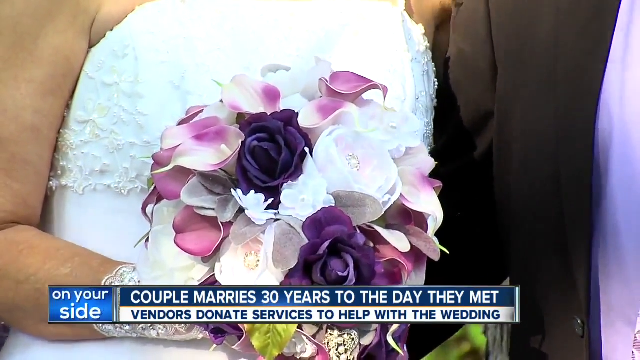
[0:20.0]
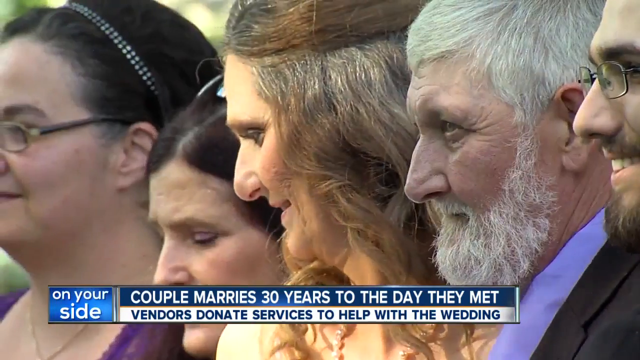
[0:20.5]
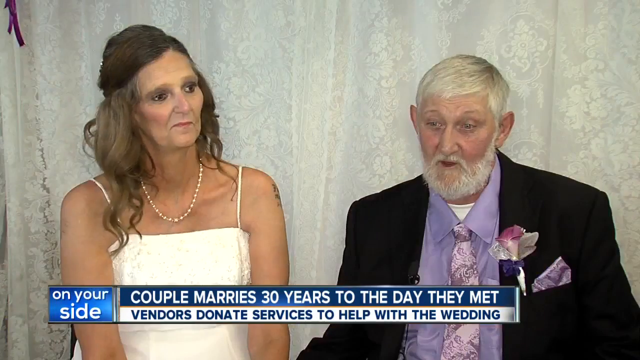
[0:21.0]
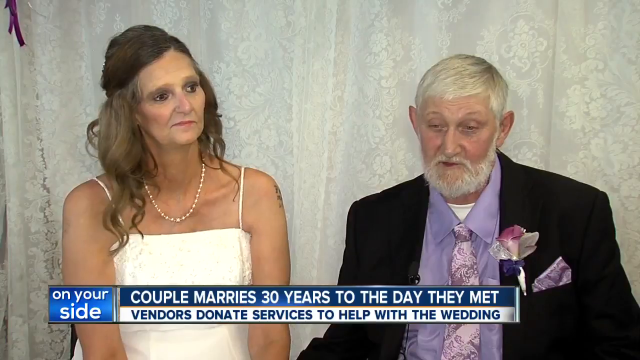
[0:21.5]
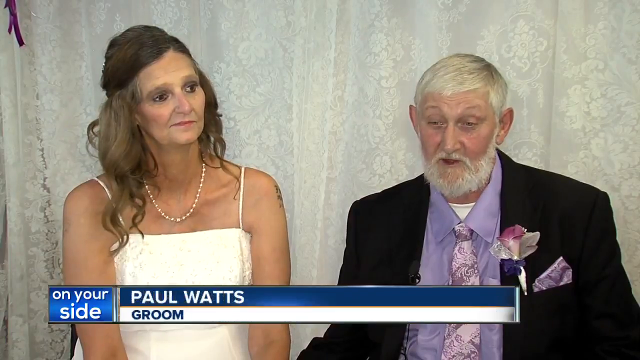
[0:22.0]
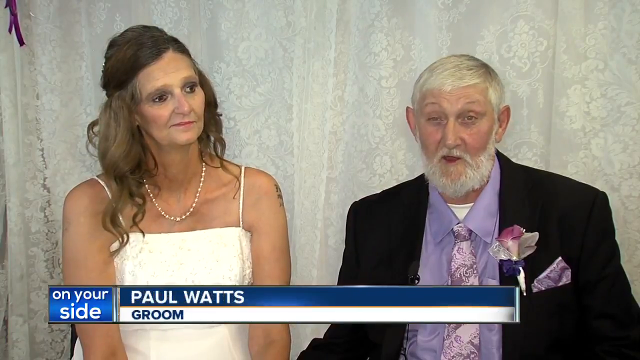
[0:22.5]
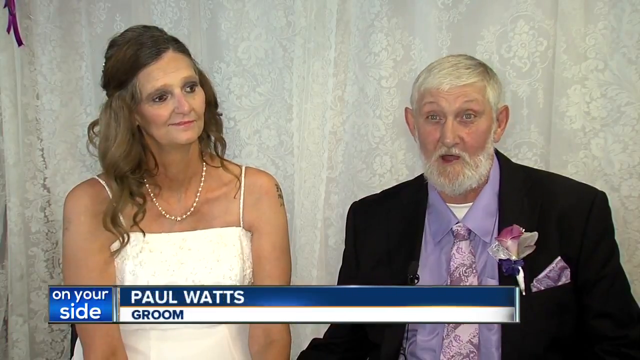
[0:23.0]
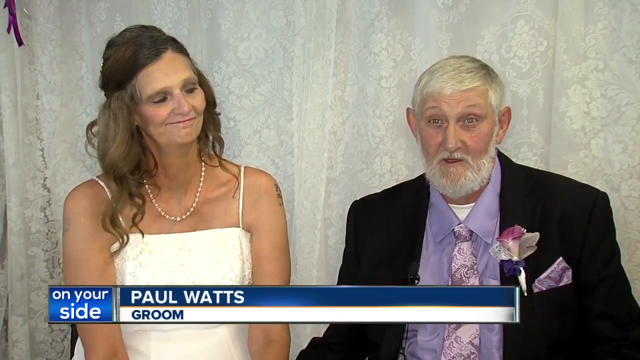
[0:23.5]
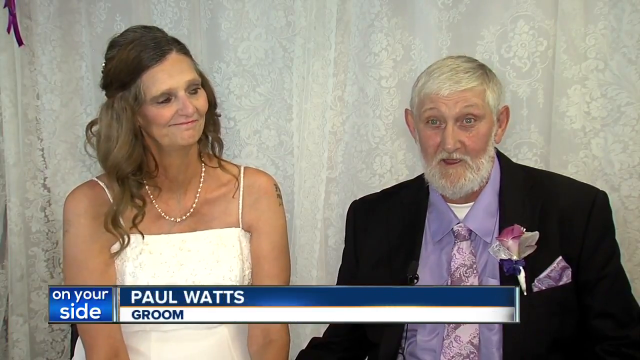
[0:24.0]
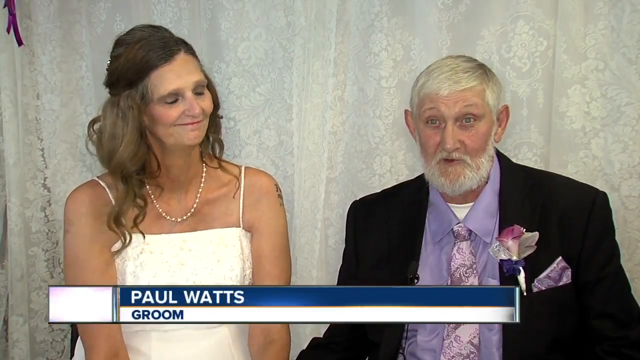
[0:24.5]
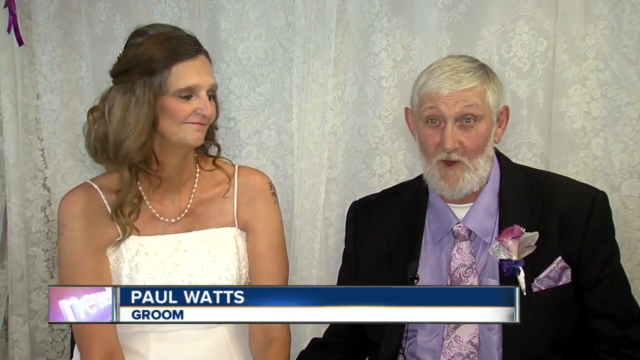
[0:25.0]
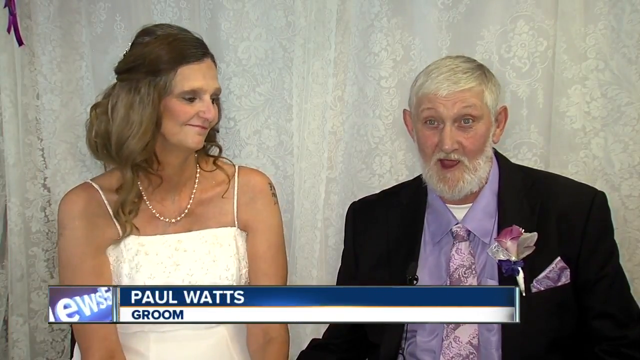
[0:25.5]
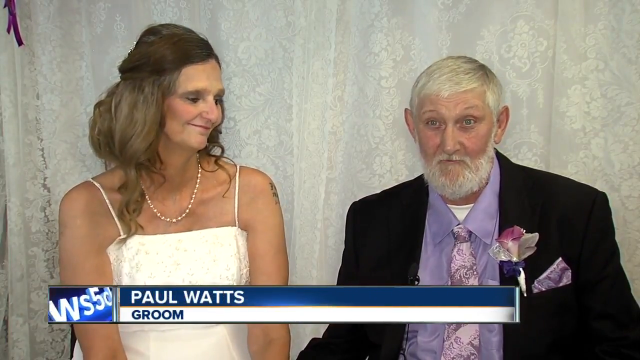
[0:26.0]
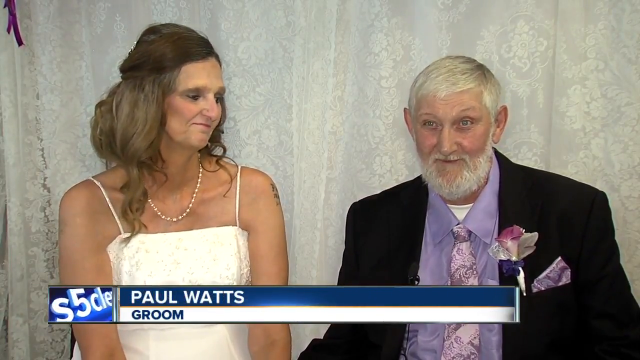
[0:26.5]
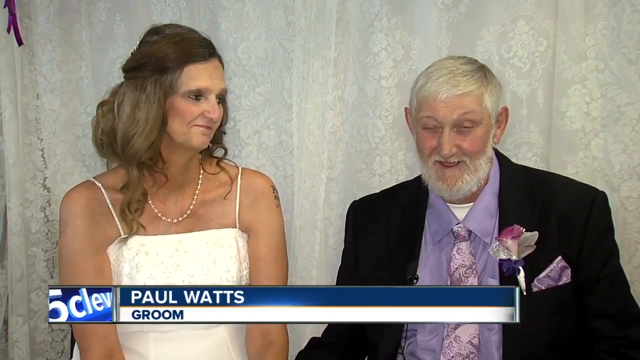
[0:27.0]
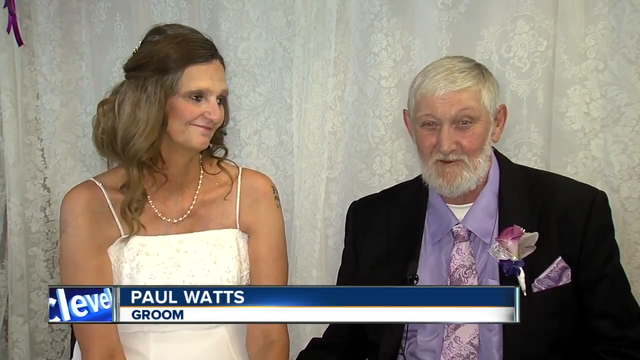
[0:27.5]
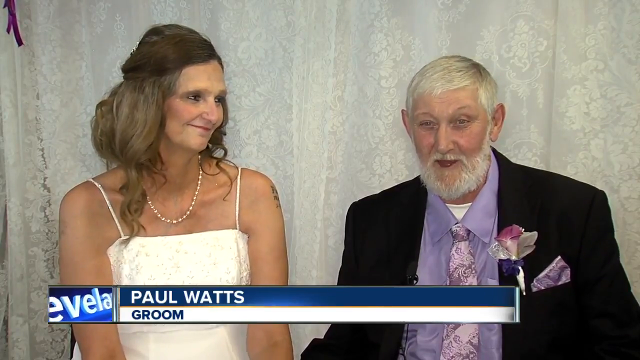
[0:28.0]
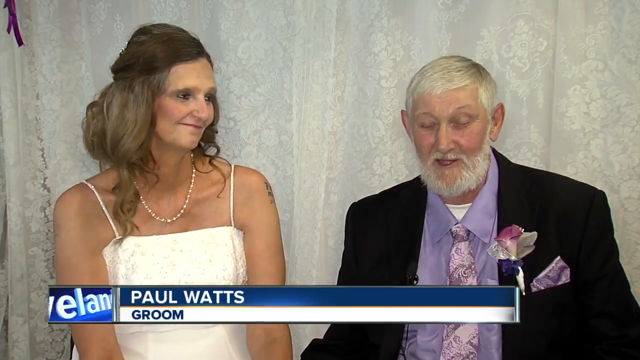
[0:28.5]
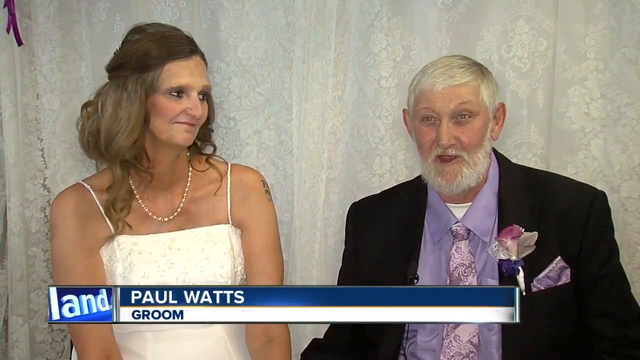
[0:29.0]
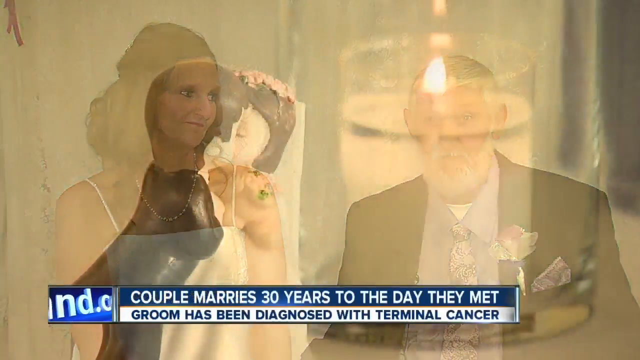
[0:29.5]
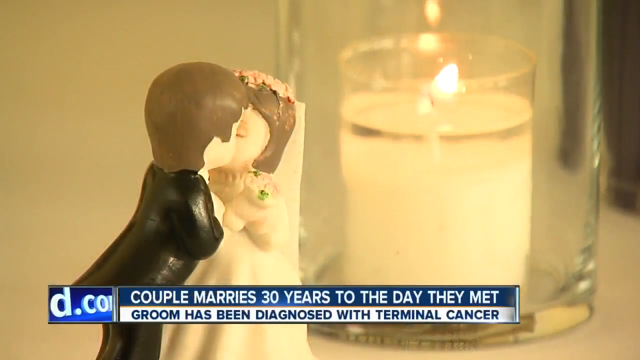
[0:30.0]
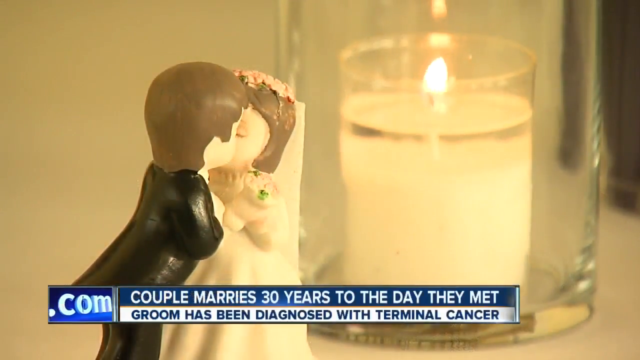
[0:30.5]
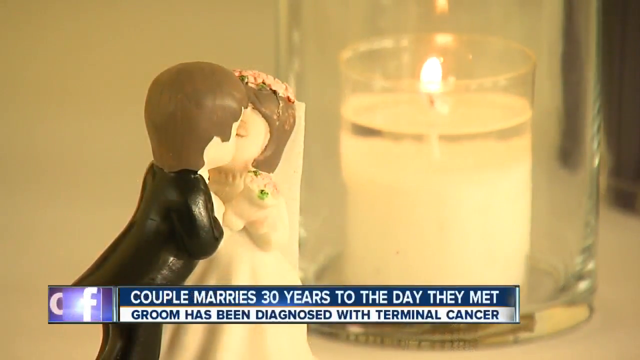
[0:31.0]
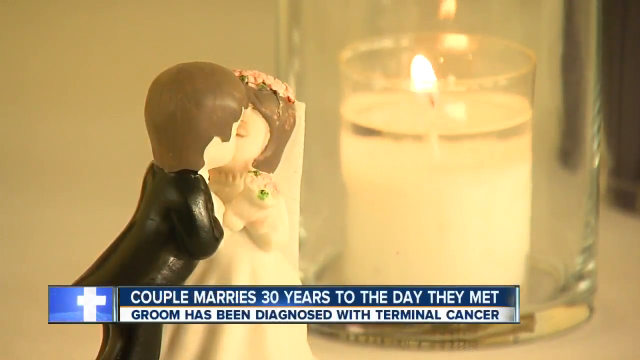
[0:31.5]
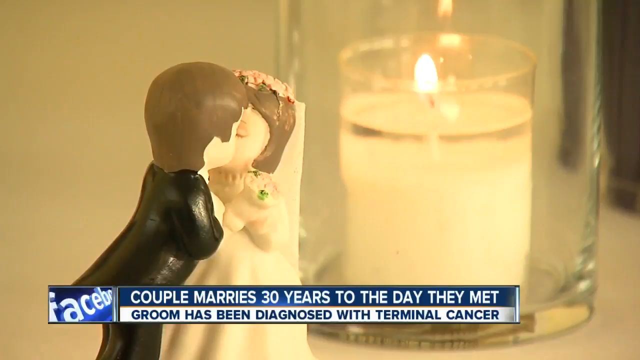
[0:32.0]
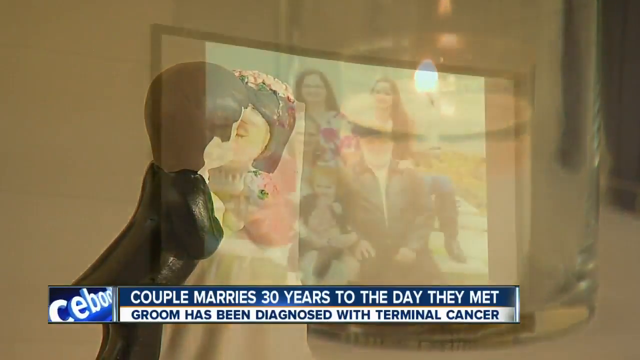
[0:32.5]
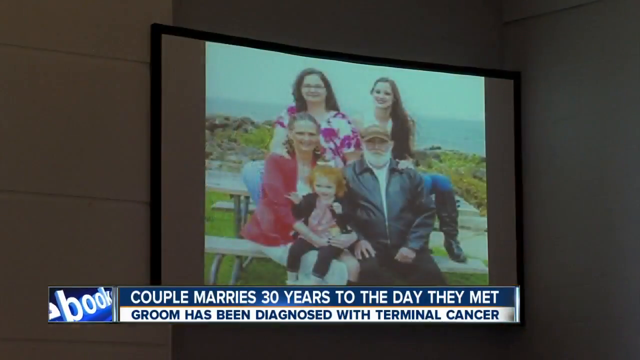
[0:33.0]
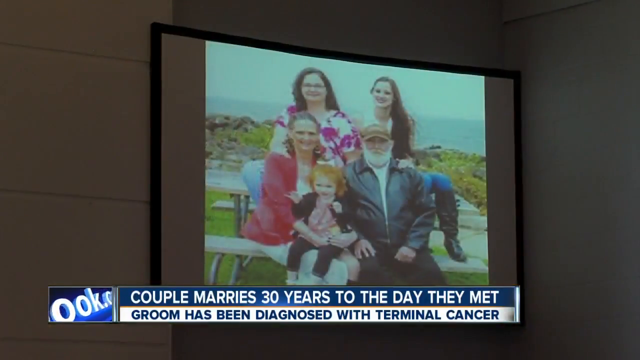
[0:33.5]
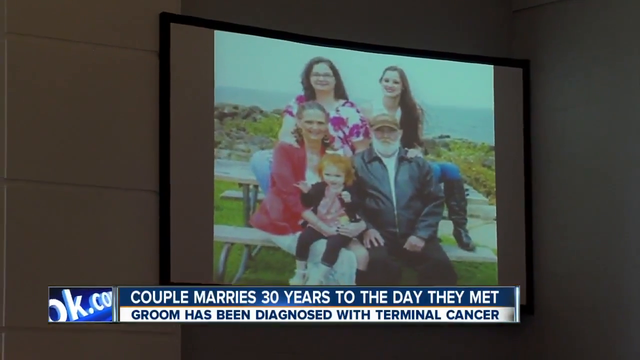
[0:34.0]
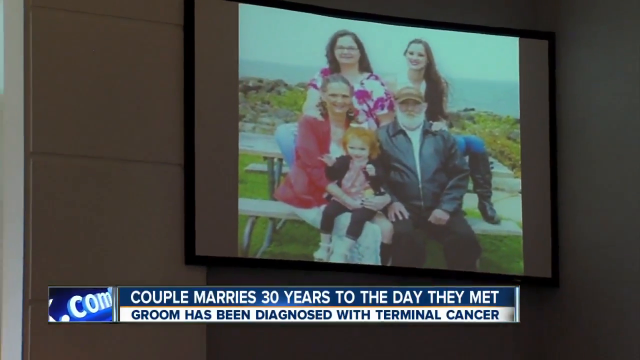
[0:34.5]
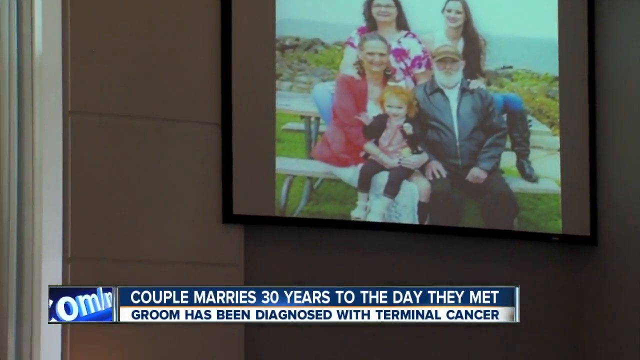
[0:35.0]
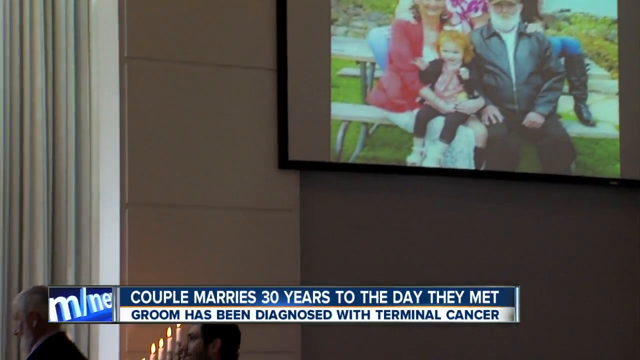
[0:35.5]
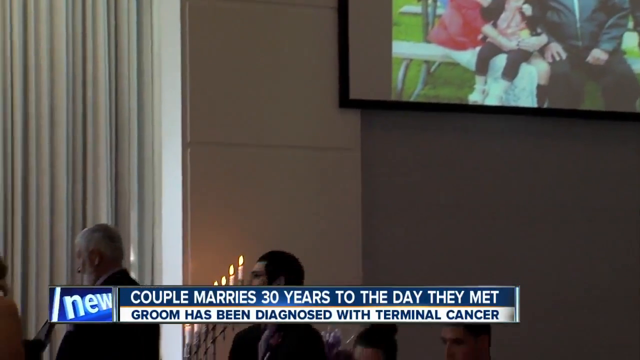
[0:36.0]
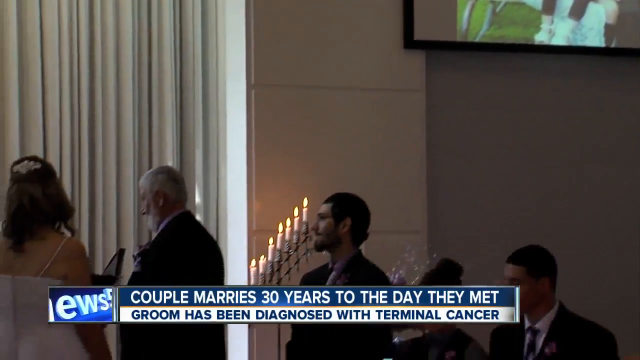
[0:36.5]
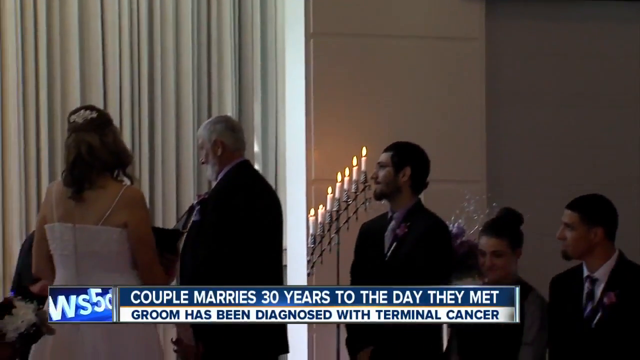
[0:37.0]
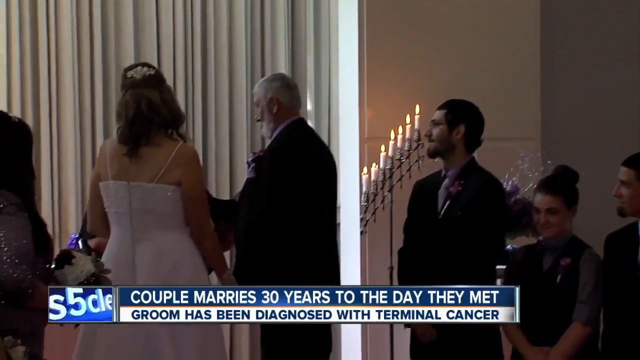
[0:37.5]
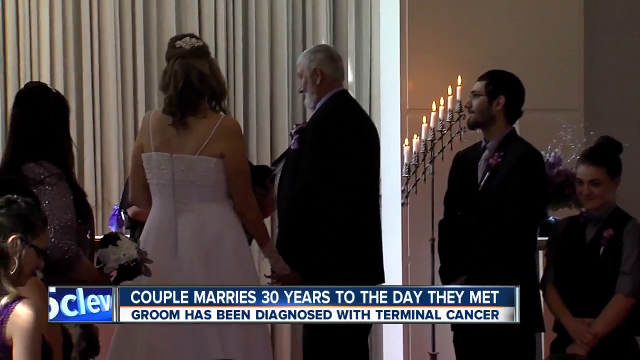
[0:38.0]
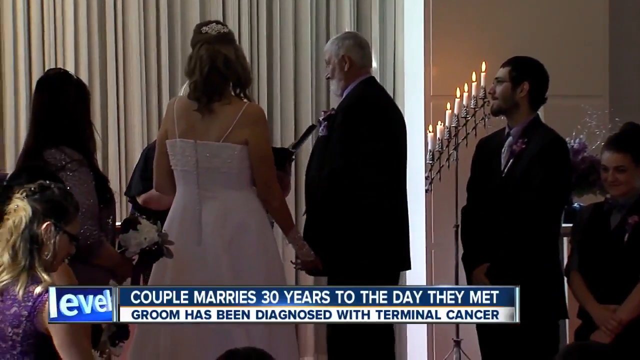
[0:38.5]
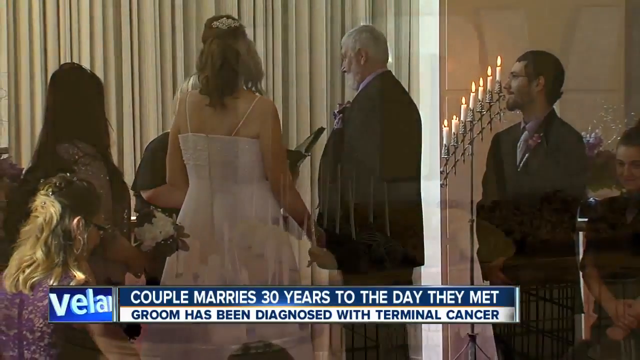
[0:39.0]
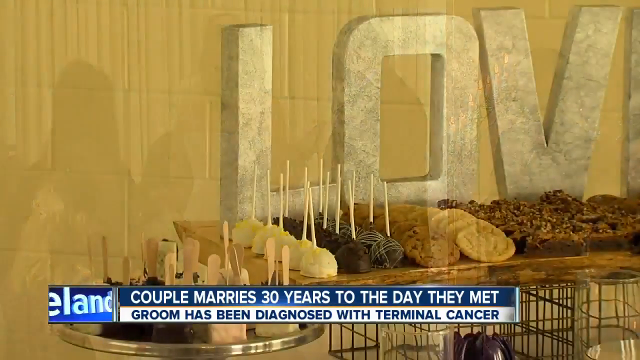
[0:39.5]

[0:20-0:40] The husband and wife are being asked to sign together. They hold each other's hands and enjoy each other's company. They are checking biscuits. Friends and family come around to support them, as well as the community.